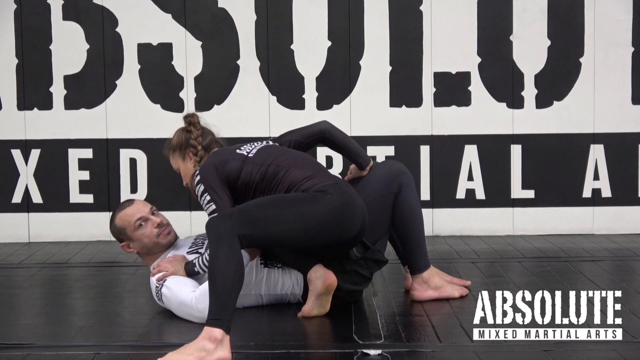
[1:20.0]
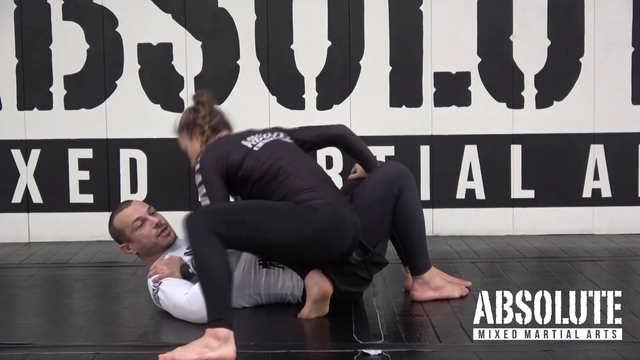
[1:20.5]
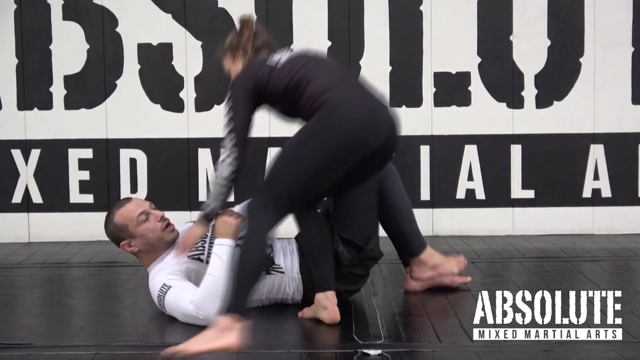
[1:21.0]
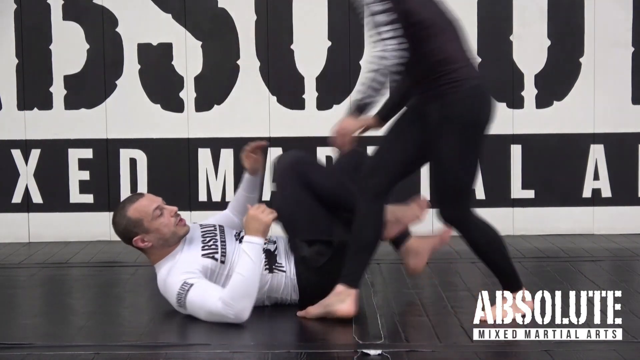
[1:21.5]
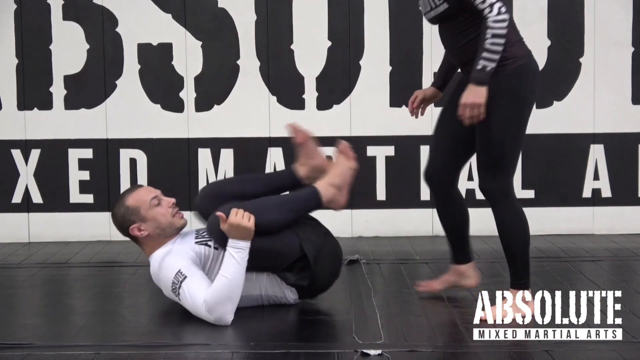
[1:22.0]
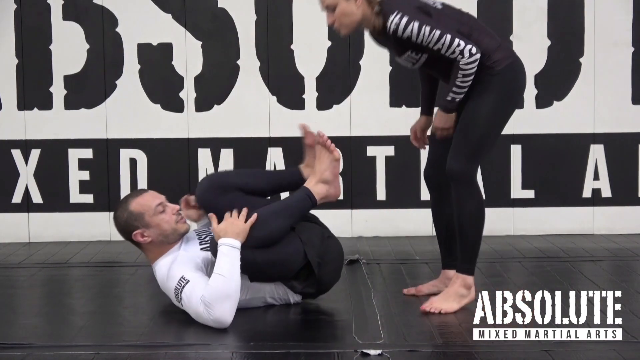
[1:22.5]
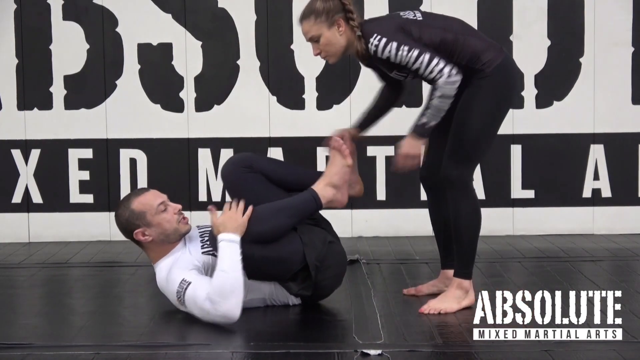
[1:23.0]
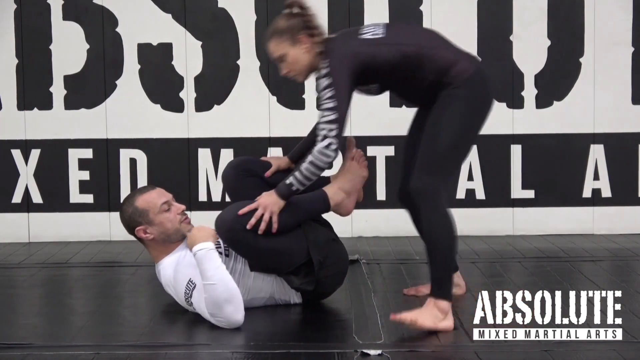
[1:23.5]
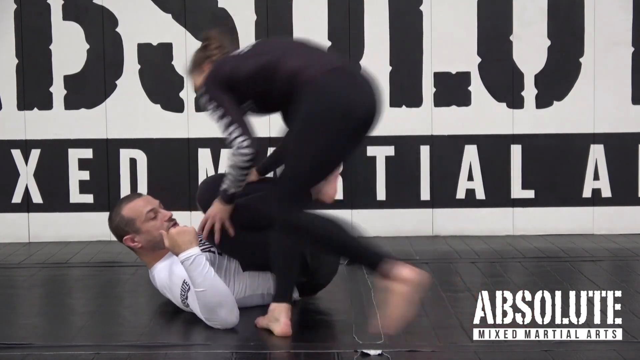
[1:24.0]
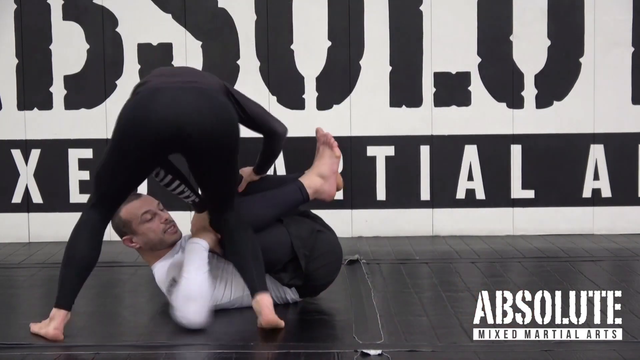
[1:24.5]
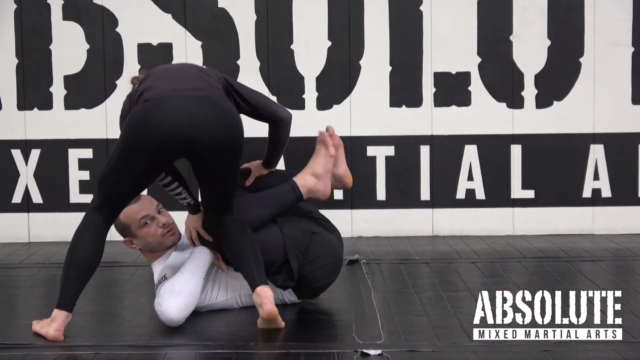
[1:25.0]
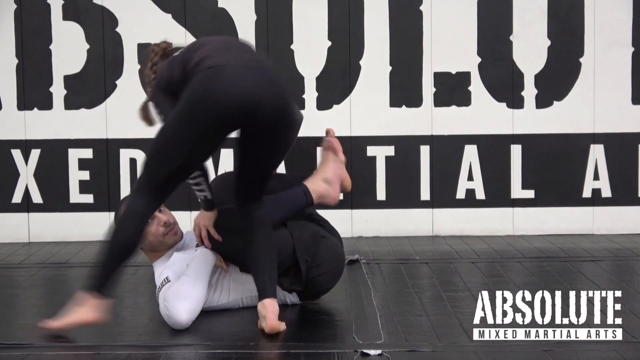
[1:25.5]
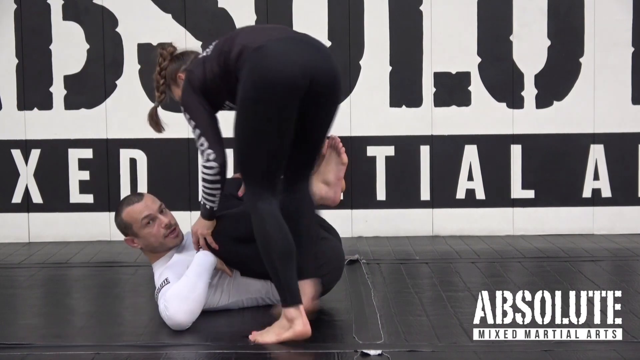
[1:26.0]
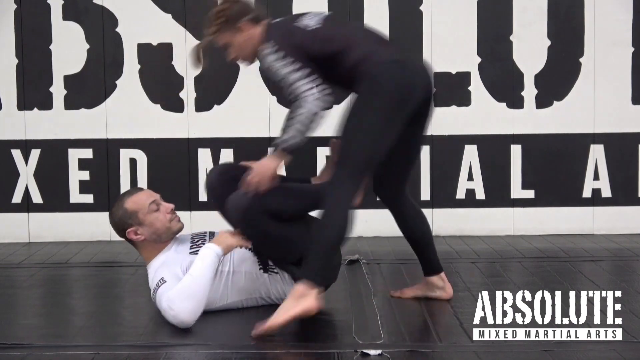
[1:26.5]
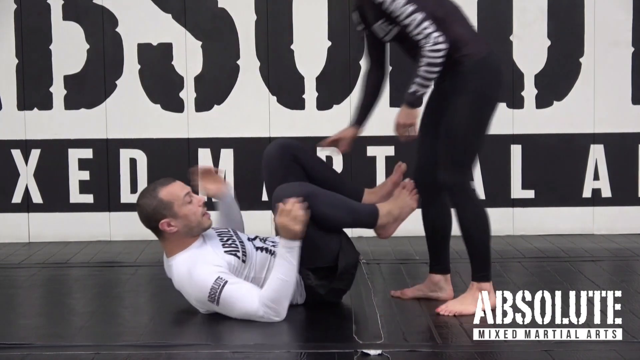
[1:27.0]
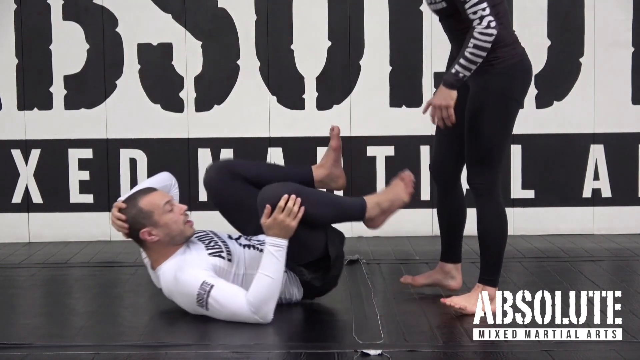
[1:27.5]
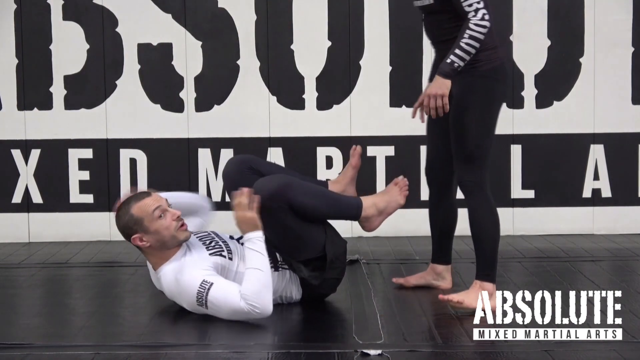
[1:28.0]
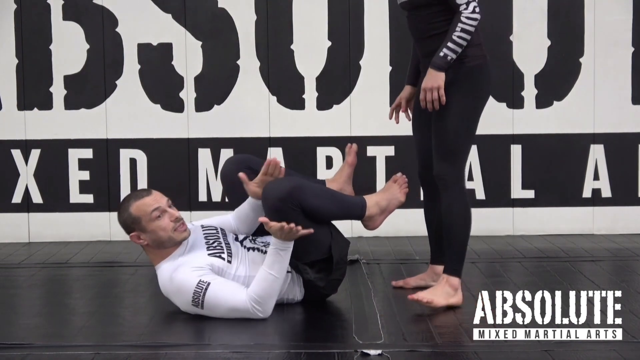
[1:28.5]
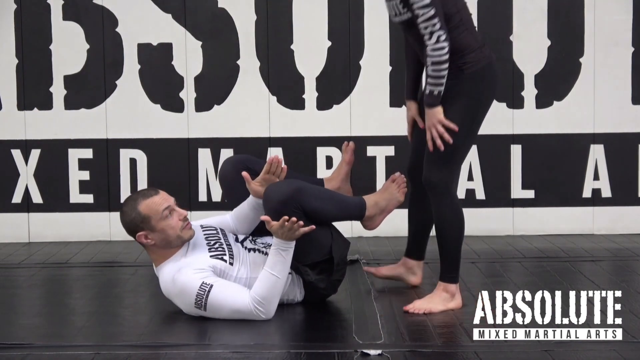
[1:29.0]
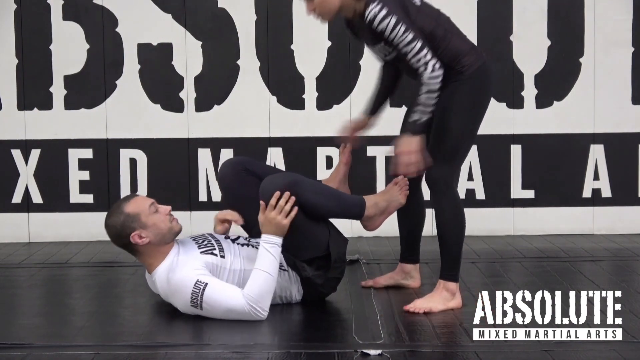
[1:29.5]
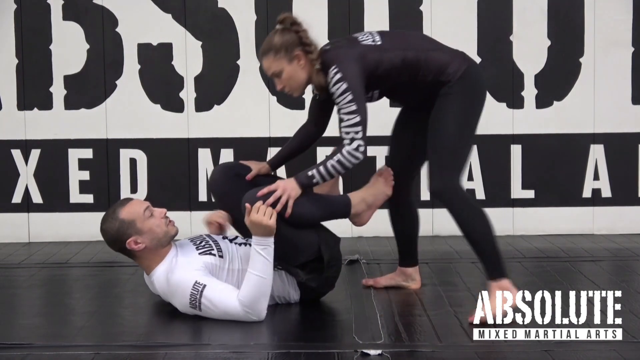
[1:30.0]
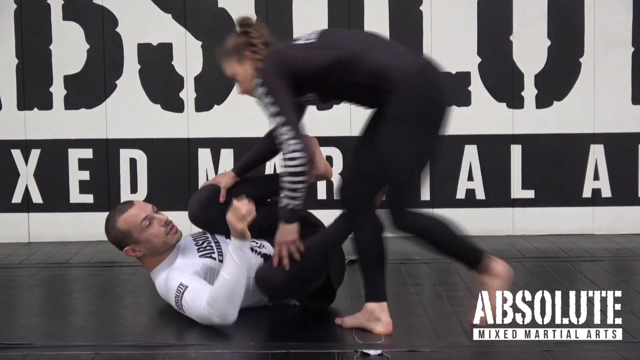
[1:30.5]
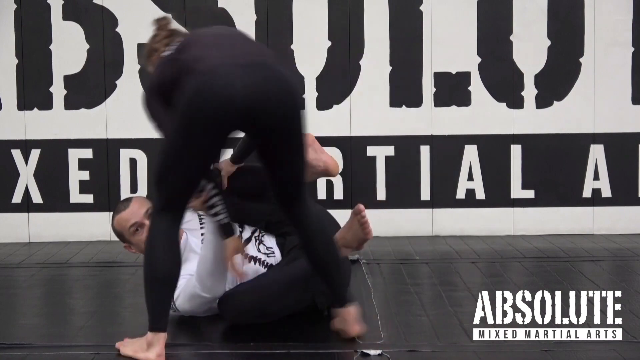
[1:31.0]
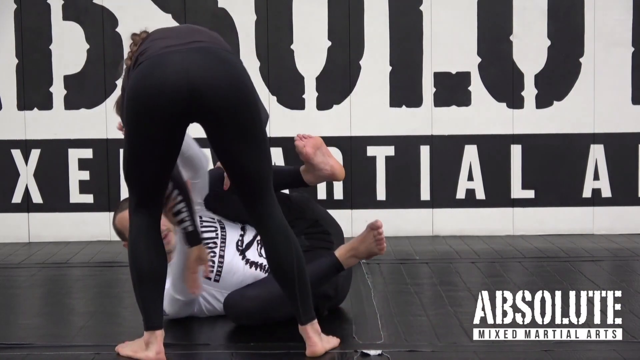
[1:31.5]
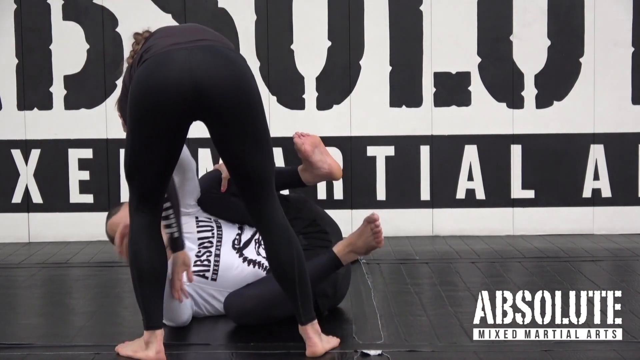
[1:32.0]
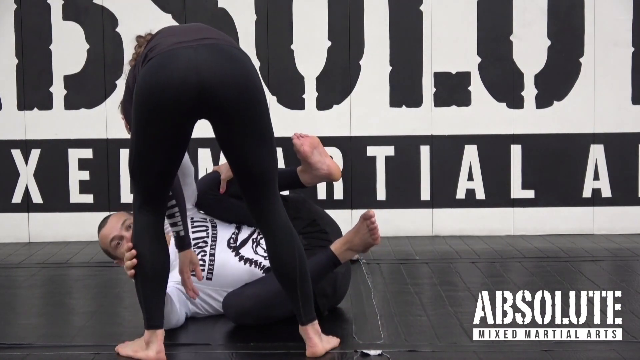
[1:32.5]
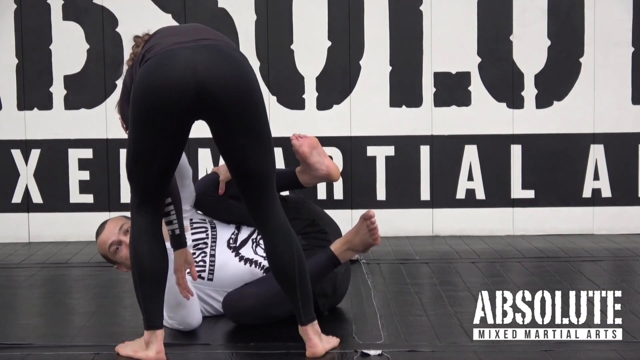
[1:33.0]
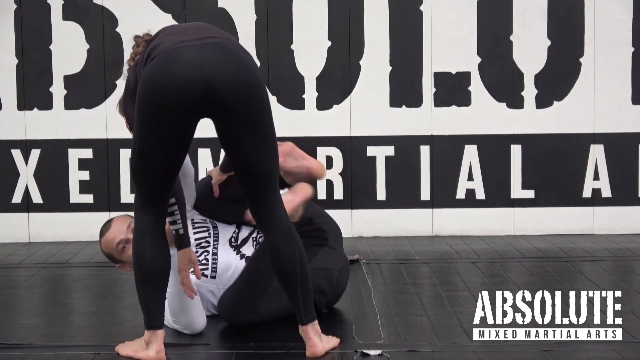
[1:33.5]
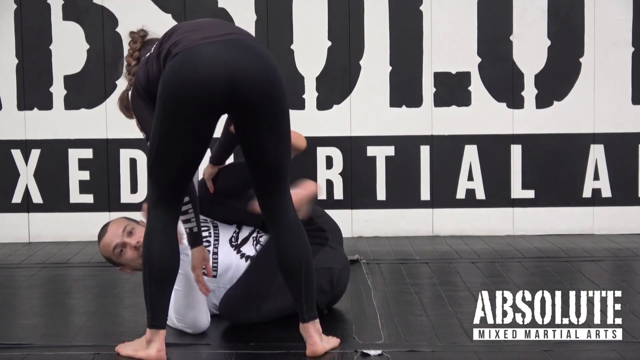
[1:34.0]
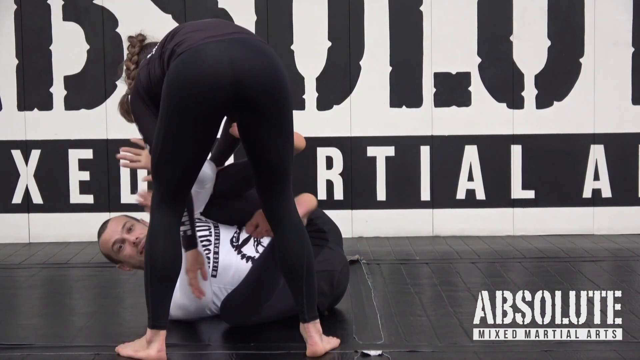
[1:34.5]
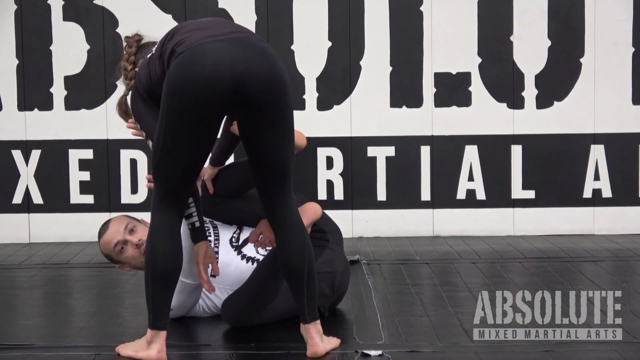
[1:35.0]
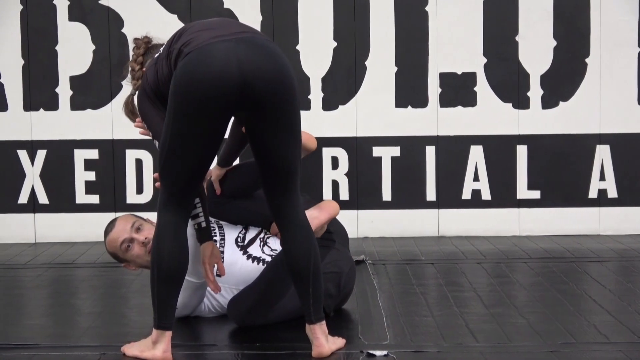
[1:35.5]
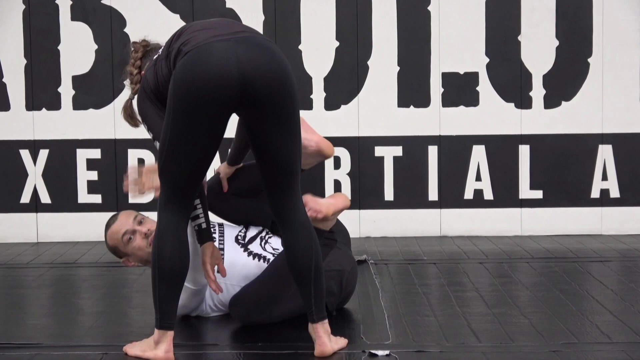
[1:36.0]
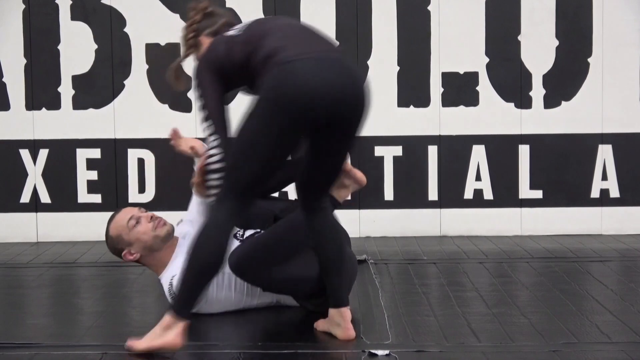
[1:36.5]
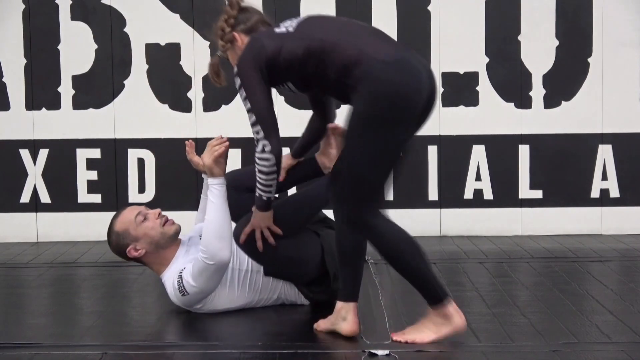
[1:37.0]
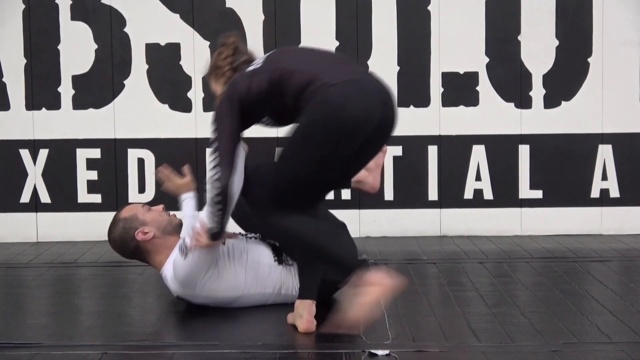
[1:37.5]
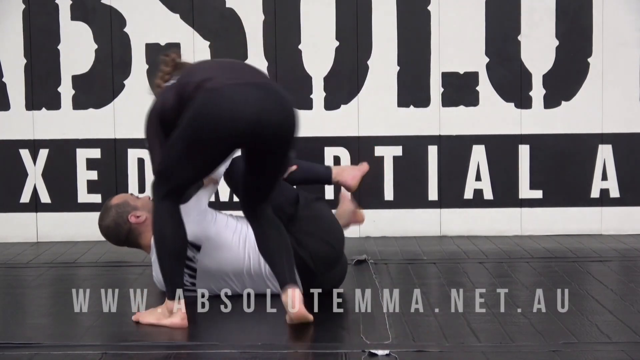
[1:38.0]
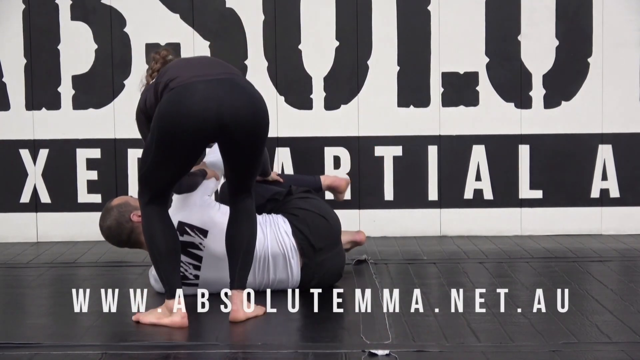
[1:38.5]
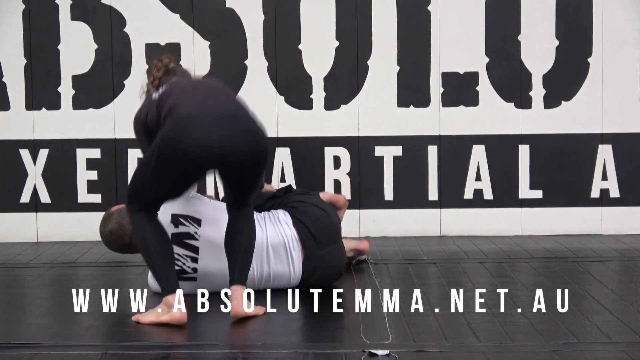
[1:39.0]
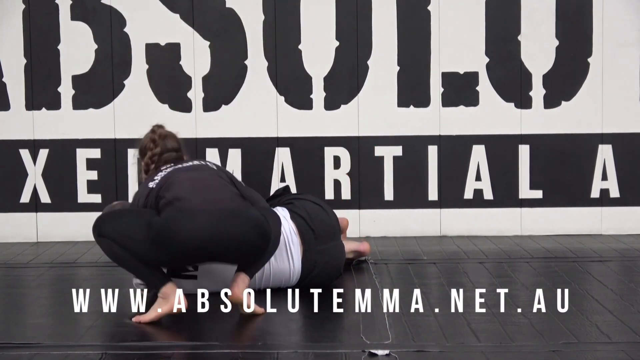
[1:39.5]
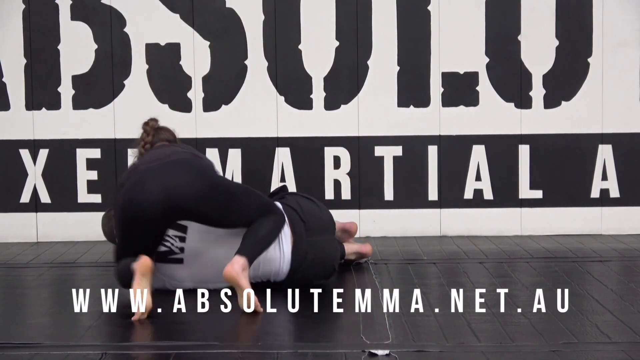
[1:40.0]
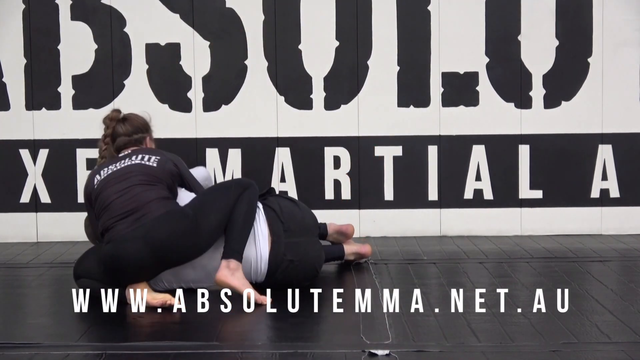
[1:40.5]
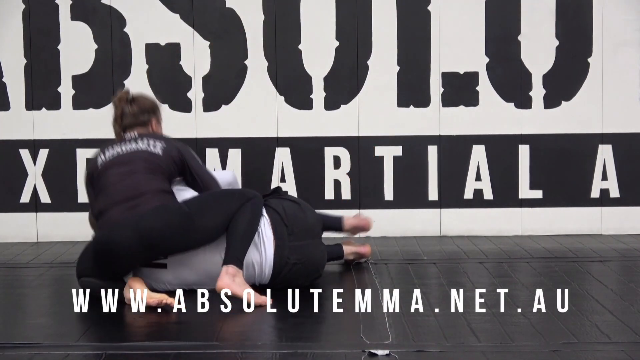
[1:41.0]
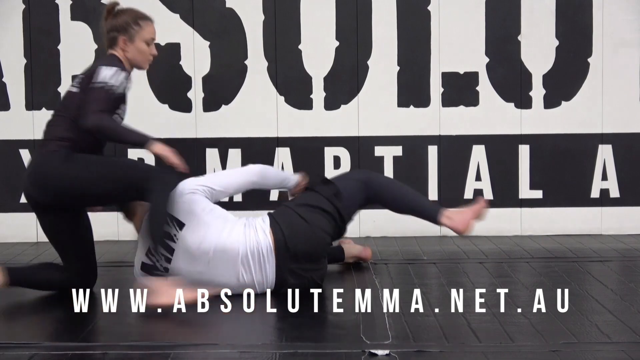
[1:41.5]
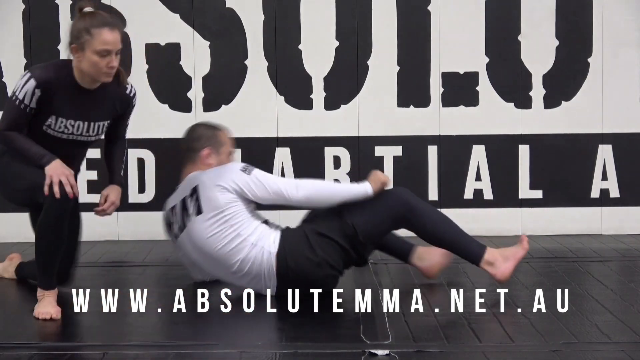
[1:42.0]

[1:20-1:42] Two people are on a black wrestling mat, the woman positioned over the man. The woman, who is white, wears all-black spandex clothing with a long-sleeved black top with white lettering; she is barefoot and has brown hair braided in a ponytail. The man, also white, lies on his back with his knees facing up and his bare feet flat on the mat, looking towards the camera or possibly an audience and giving instruction. The woman quickly stands up over his knees. He moves quickly around so her butt faces the camera, and his face is visible between her legs as he looks over and speaks. The woman positions her hands on his knees and then rotates back to stand; his feet are now off the ground, facing vertically. The man speaks throughout, using his hands to instruct about the movements and the woman's positioning. He shifts his body again and is now slightly on his side with his knees facing the camera, while the woman's butt faces the camera; she is bent over at the waist with her hand on his knee. The man keeps looking over at the camera and then instructs the woman on where to move next. He then rolls onto his side so his back faces the camera, and the woman's back faces the camera as well.